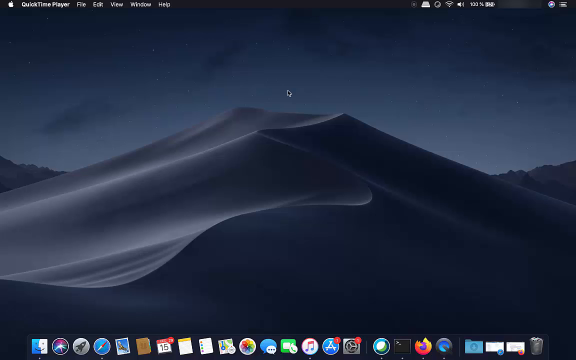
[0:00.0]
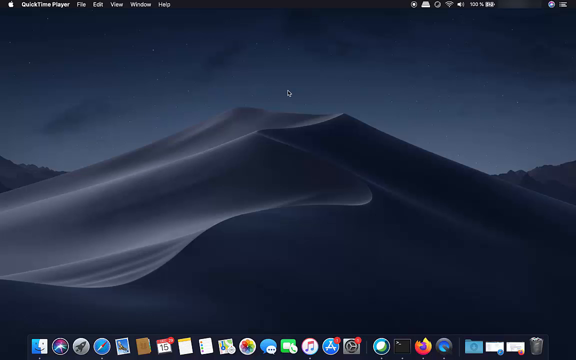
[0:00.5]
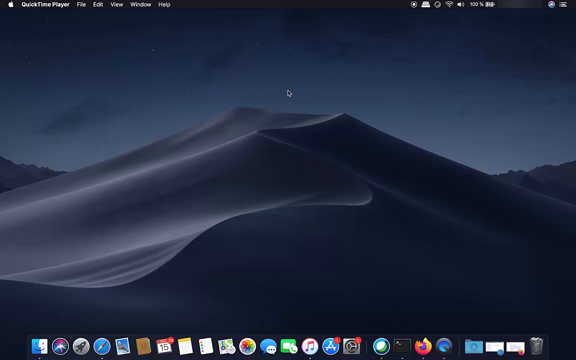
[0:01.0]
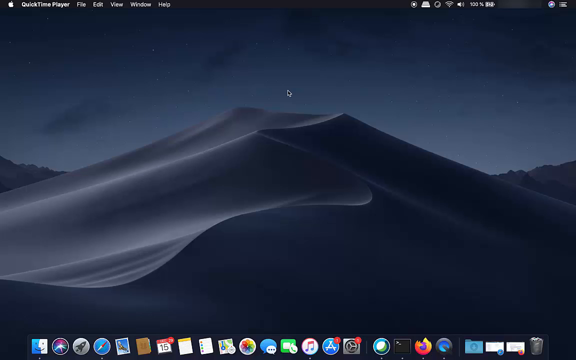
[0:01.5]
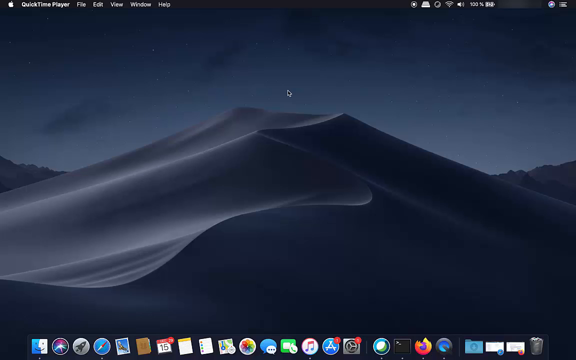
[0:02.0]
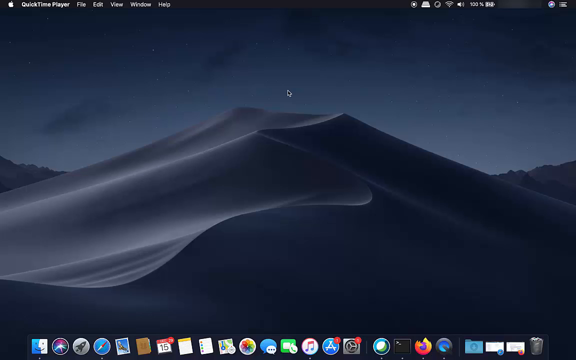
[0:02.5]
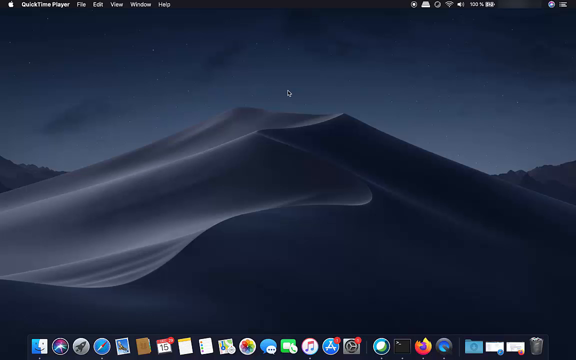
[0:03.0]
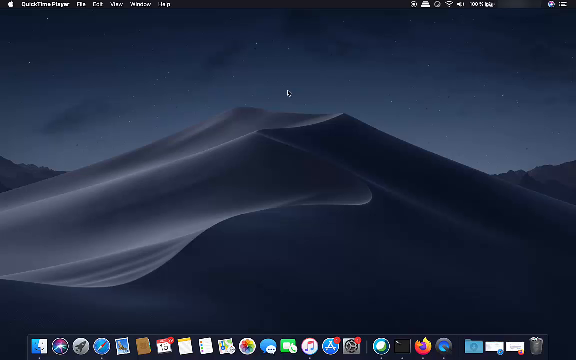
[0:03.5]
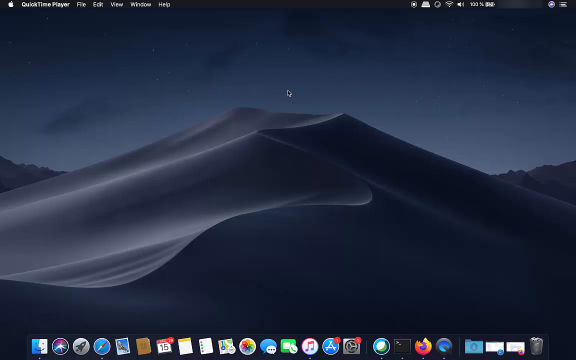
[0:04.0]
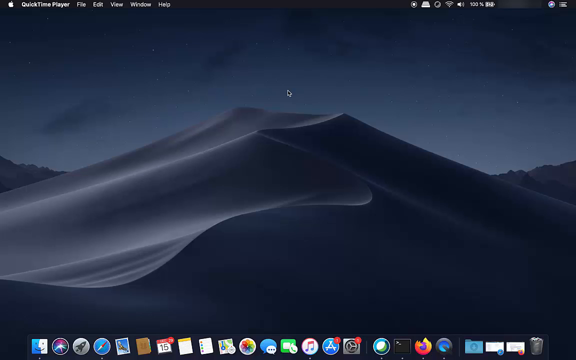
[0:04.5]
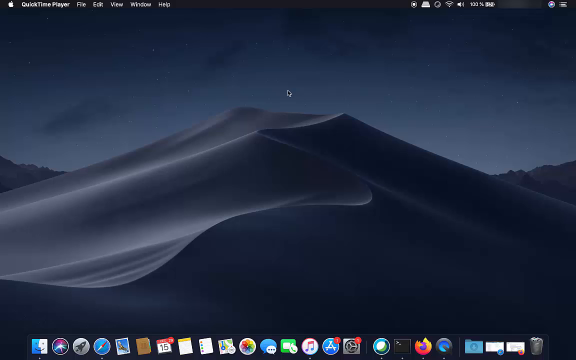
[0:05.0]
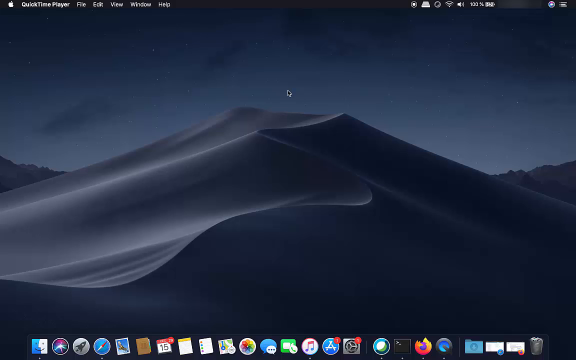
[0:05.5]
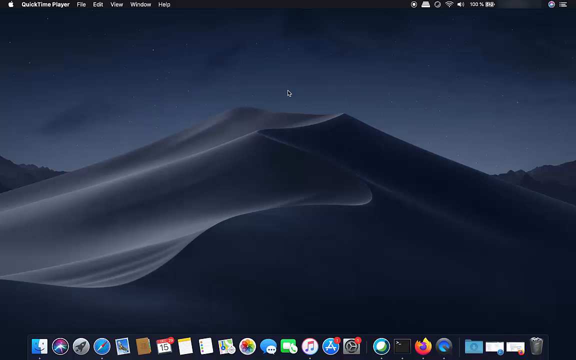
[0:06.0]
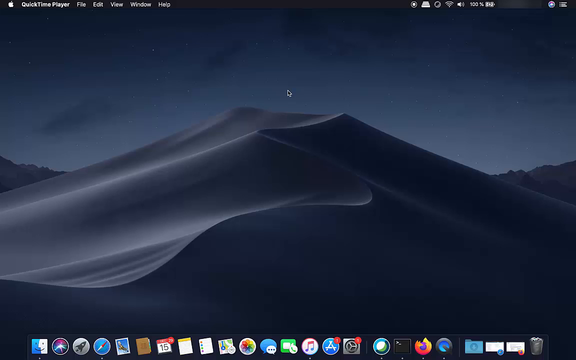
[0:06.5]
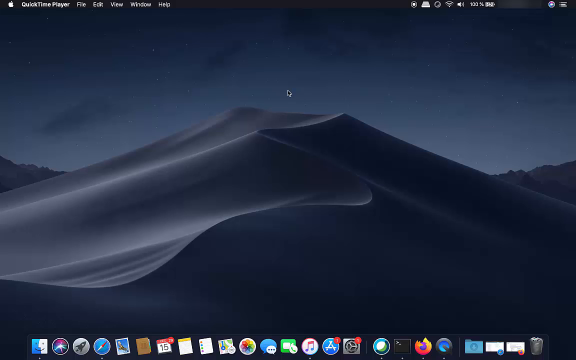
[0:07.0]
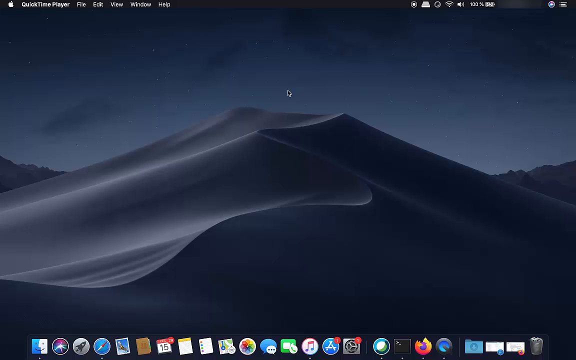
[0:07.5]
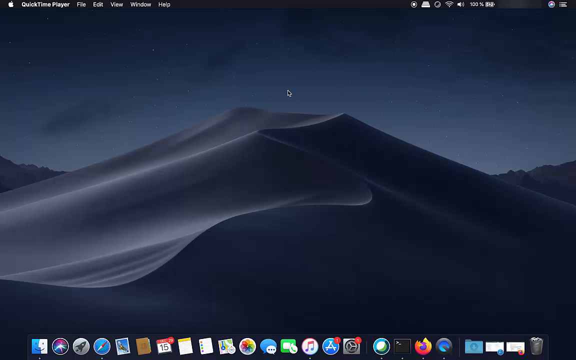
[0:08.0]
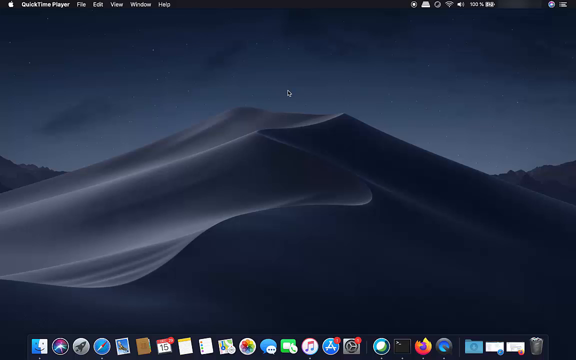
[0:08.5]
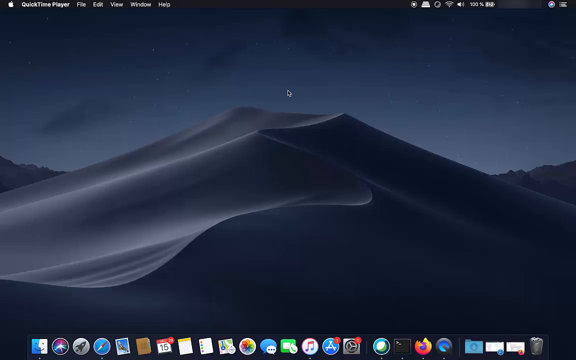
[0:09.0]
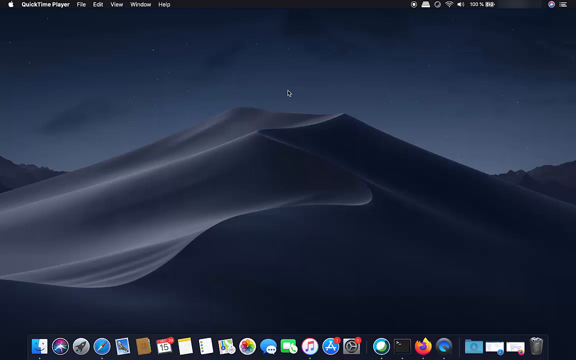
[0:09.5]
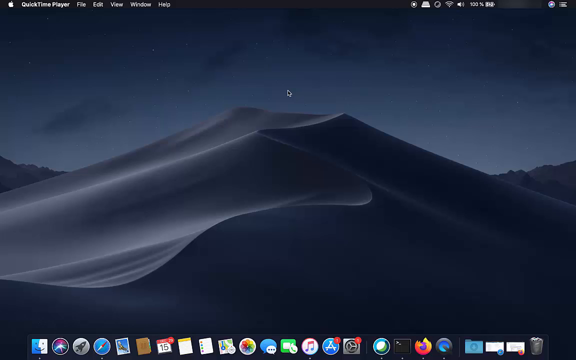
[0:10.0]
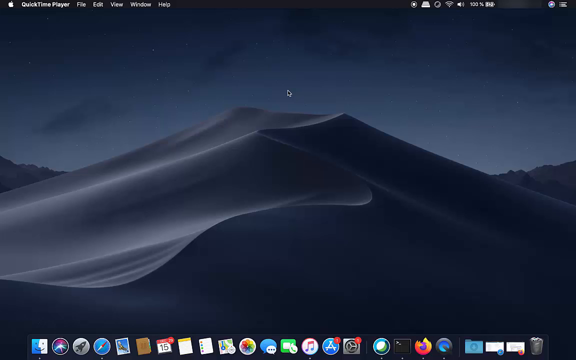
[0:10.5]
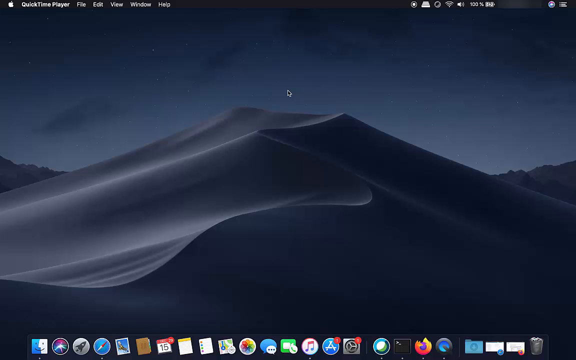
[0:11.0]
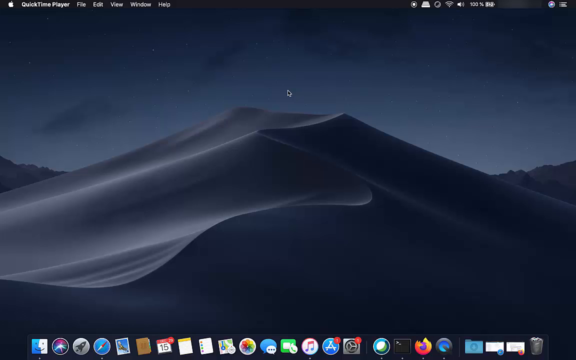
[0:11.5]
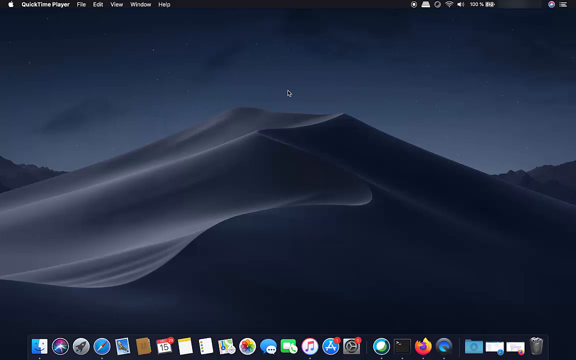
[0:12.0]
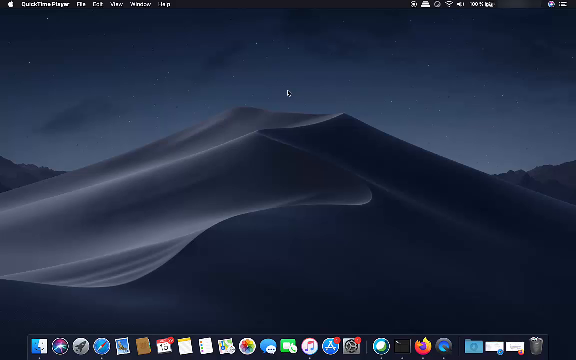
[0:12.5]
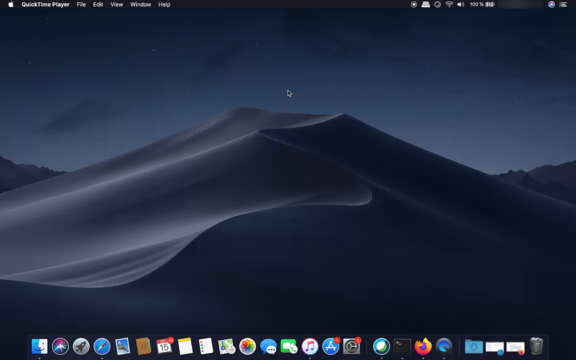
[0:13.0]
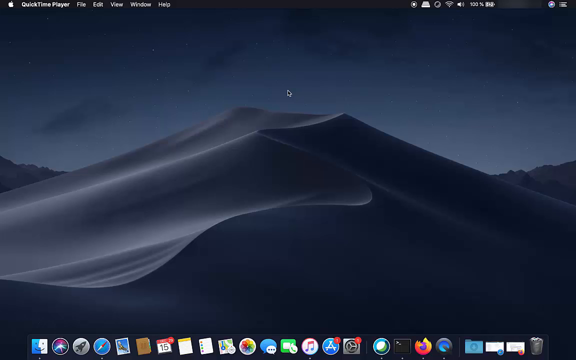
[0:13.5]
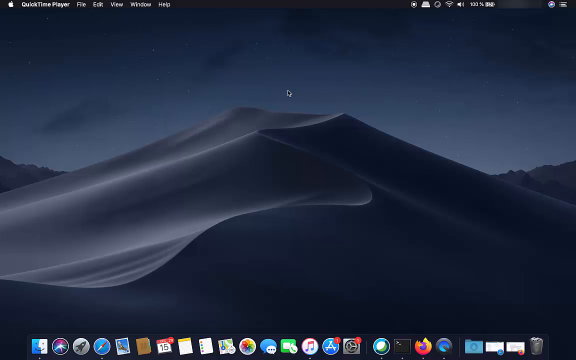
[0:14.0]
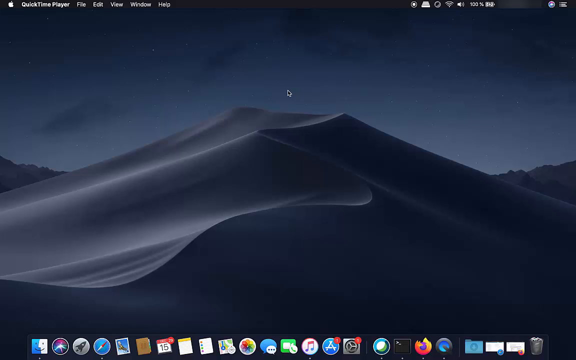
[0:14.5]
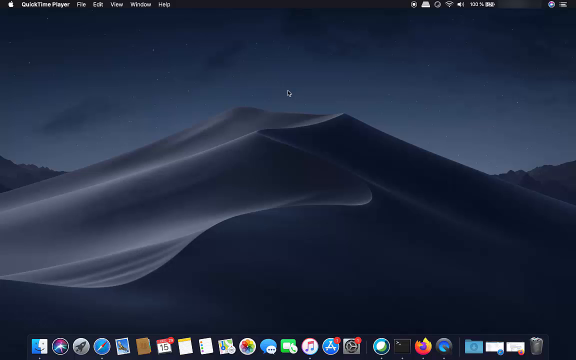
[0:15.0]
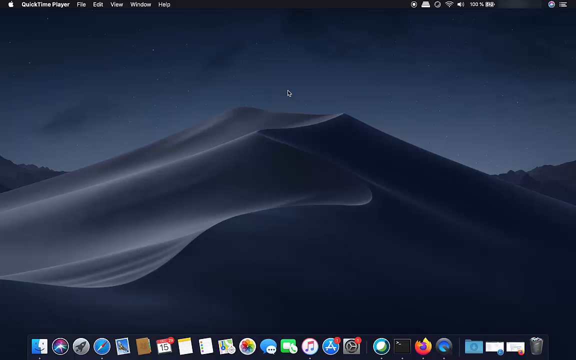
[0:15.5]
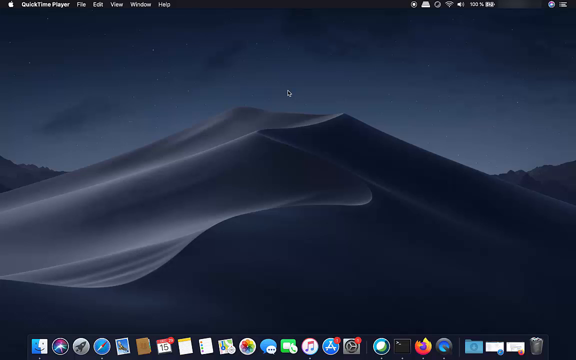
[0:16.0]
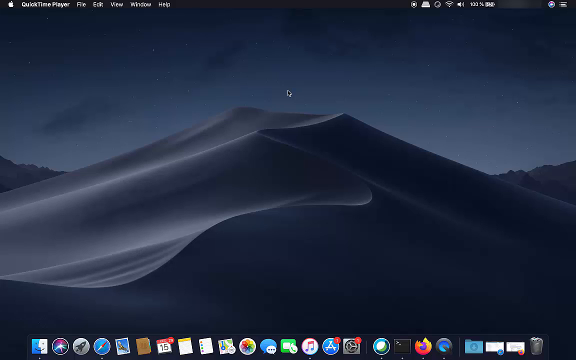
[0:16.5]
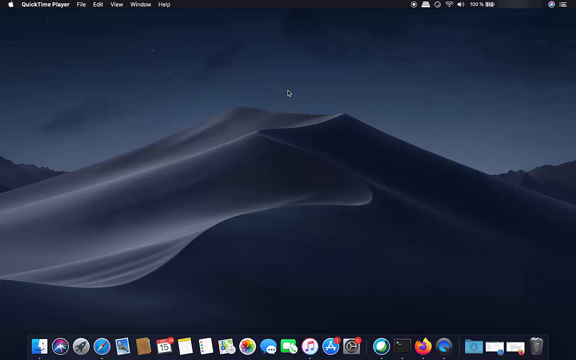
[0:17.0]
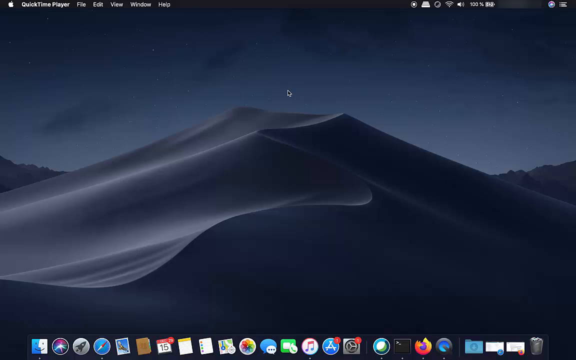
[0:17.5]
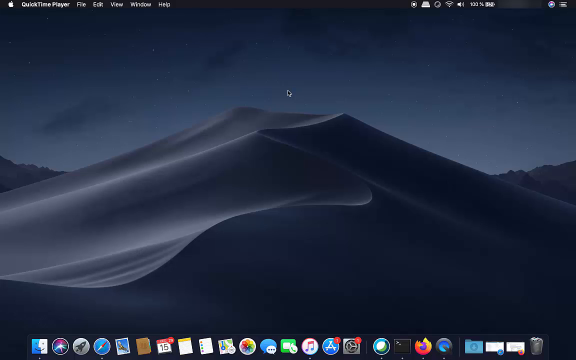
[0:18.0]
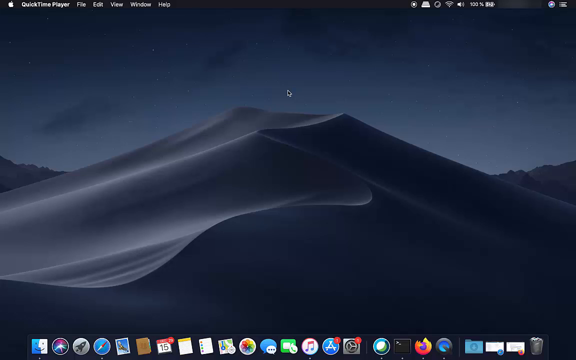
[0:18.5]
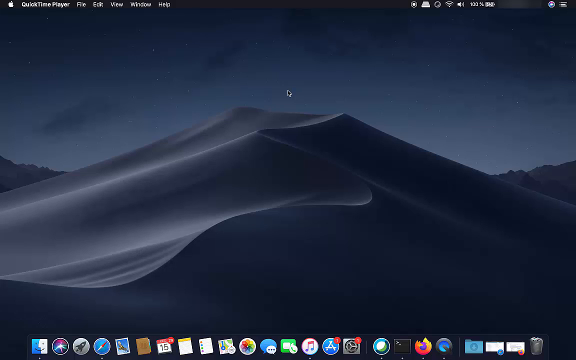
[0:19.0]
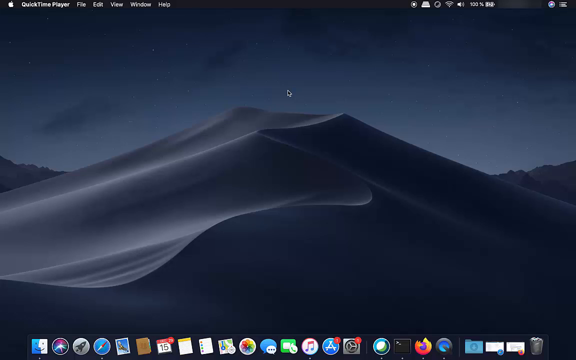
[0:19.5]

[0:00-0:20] A mountain that appears to be made of sand, since it is very smooth, is shown at night. The sky is very dark, becoming a little lighter near the horizon where it meets the land. Some moonlight shines on the sand mountain, which is grayish in color, apparently because it is nighttime. The sand has very curved edges and looks almost as if it was blown into crevices, maybe by the wind. It looks very smooth, and the right side is much darker than the left side; the left side faces the moon and has a little moonlight on it. Along the top it is evident that this is a website, possibly the wallpaper of a computer, with some symbols at the top right and some words in very small print at the top left.